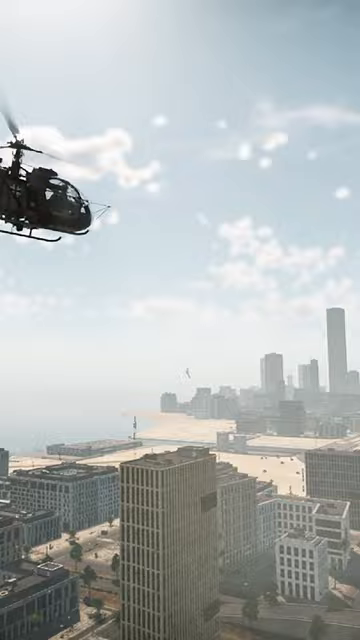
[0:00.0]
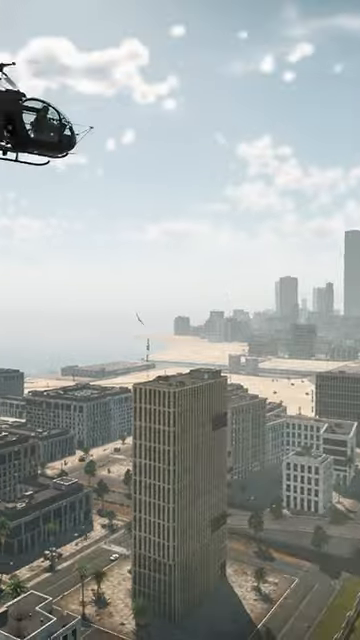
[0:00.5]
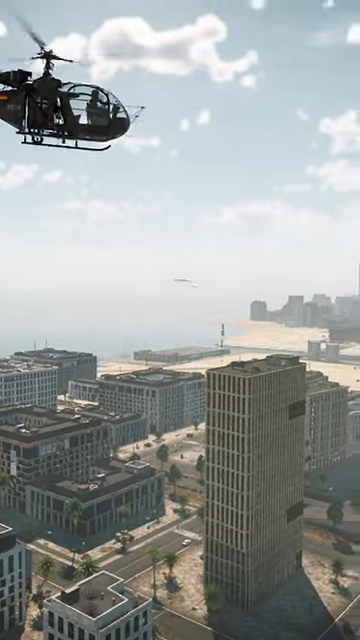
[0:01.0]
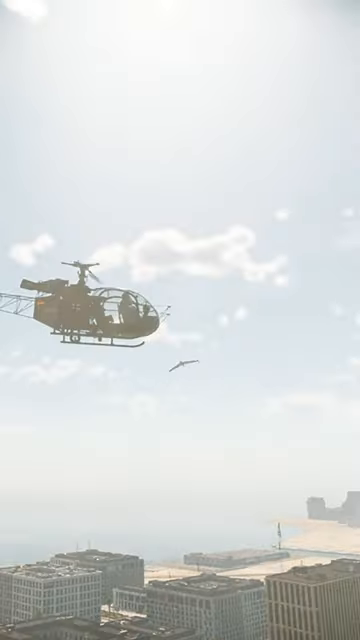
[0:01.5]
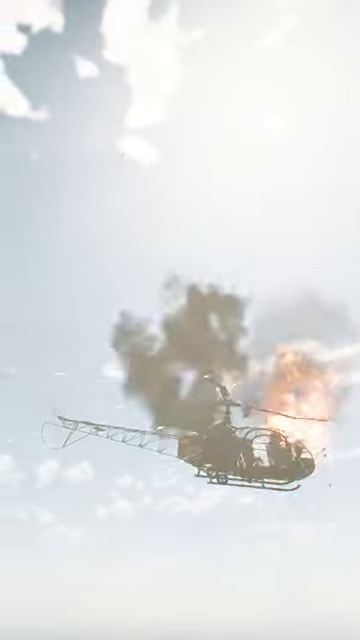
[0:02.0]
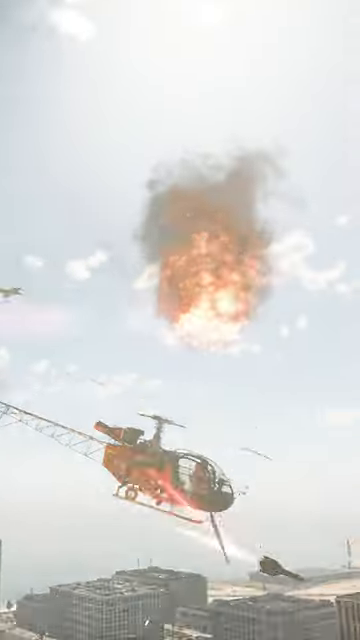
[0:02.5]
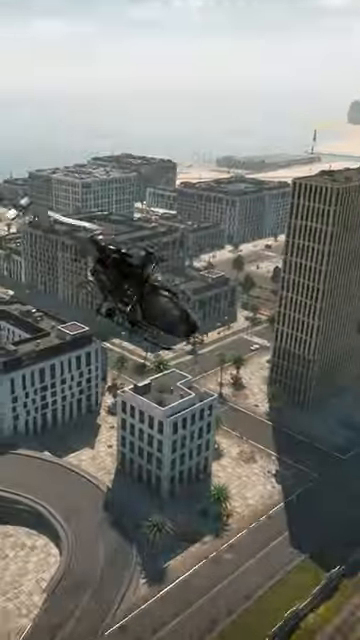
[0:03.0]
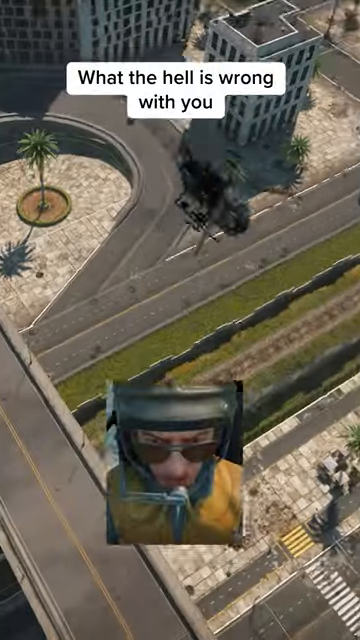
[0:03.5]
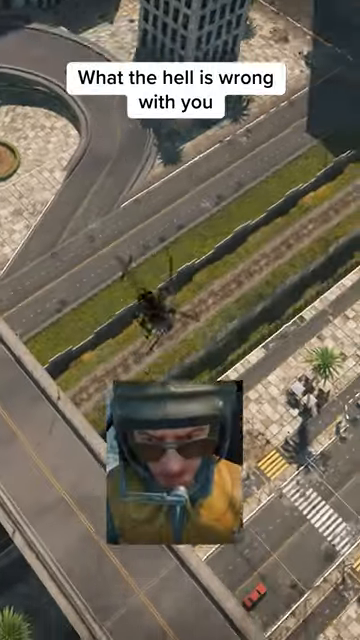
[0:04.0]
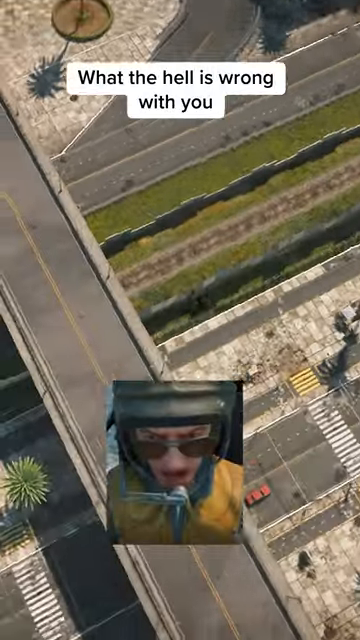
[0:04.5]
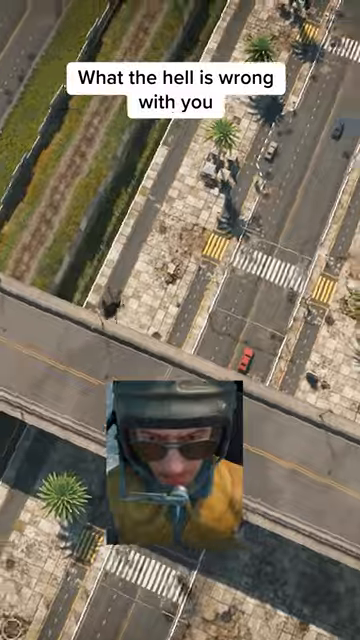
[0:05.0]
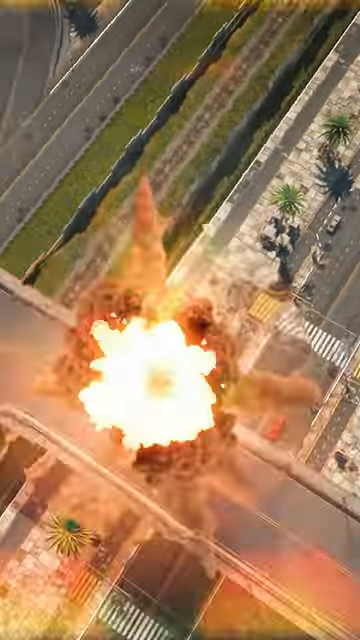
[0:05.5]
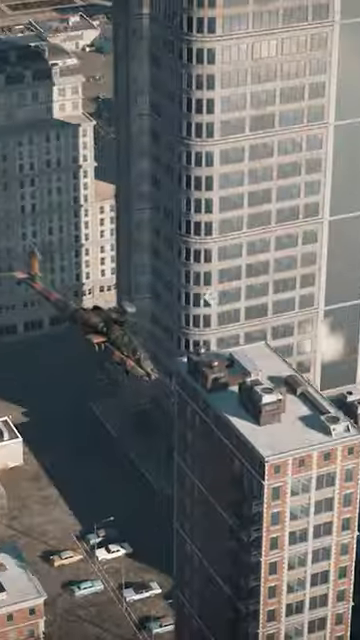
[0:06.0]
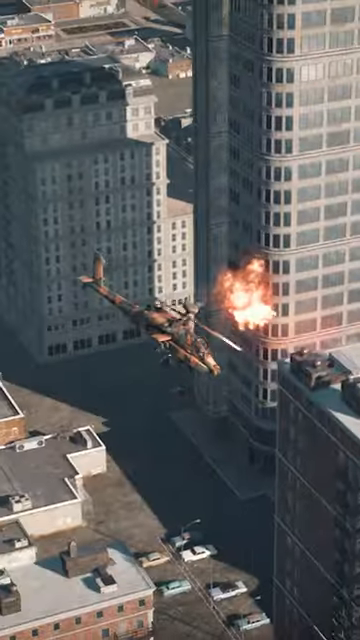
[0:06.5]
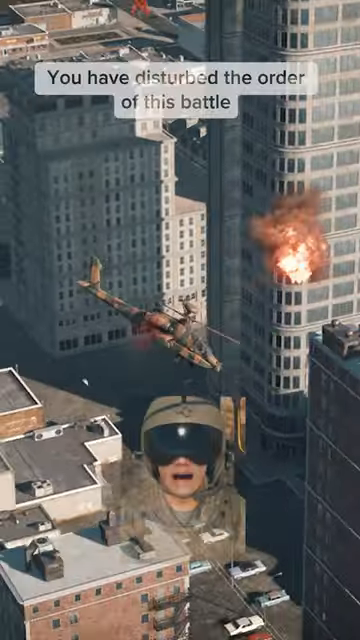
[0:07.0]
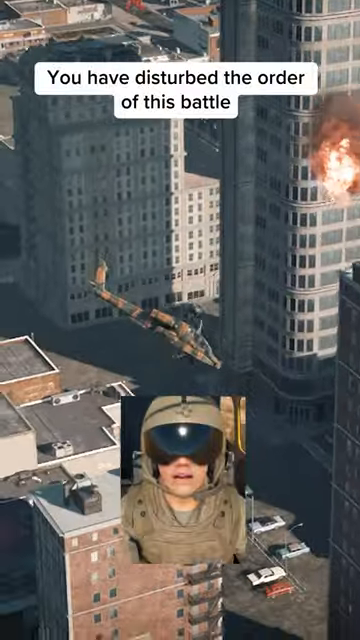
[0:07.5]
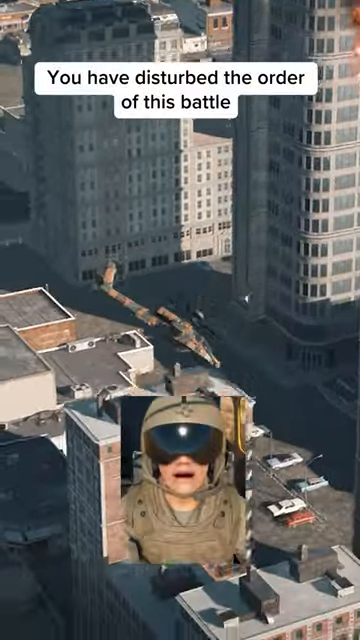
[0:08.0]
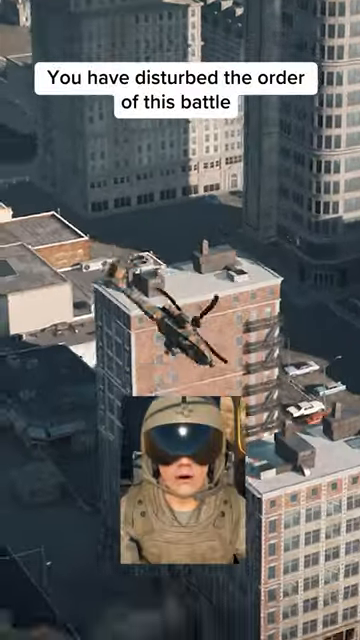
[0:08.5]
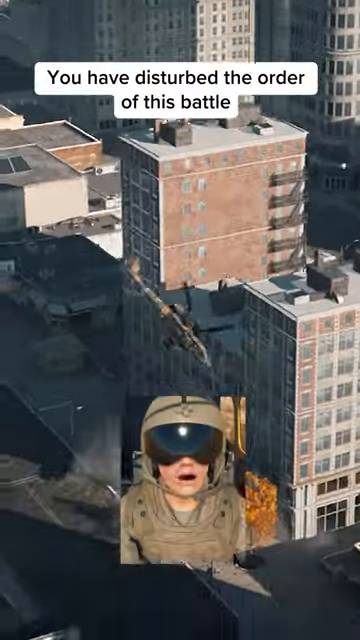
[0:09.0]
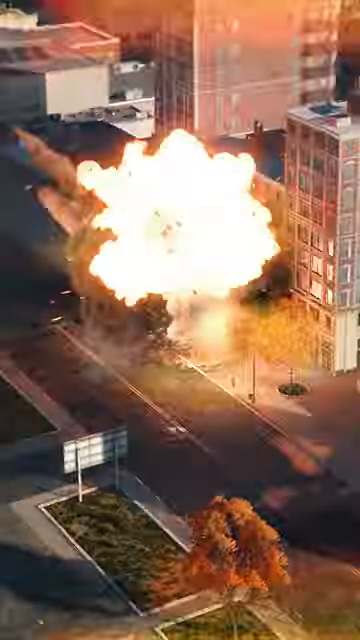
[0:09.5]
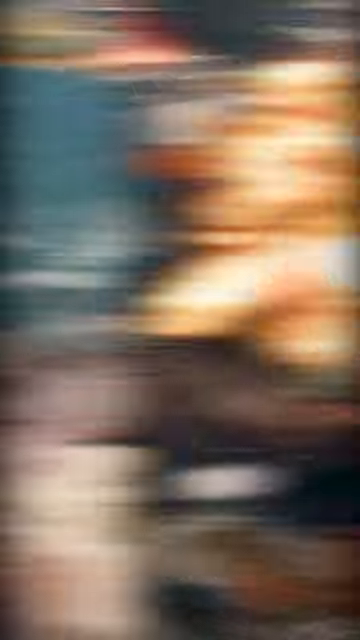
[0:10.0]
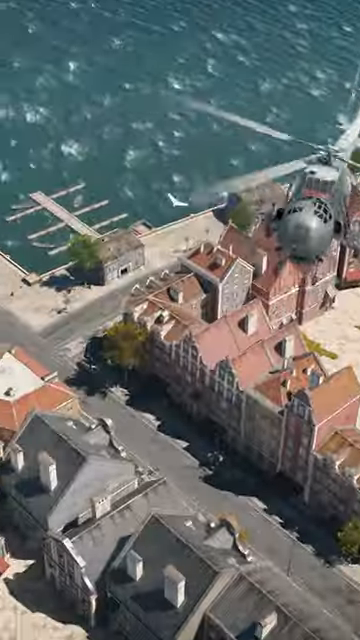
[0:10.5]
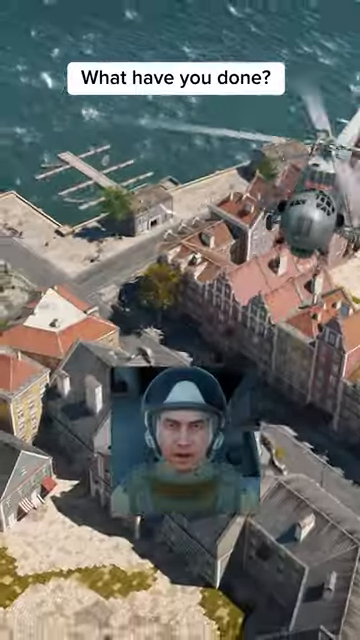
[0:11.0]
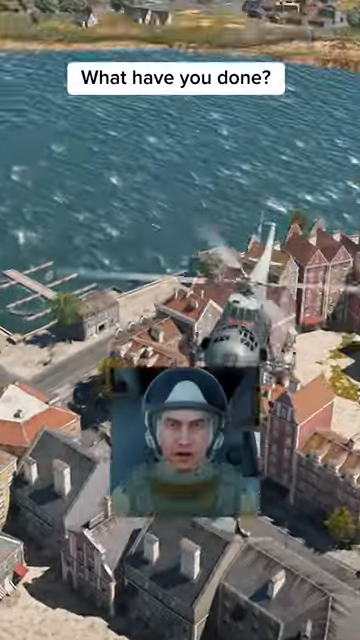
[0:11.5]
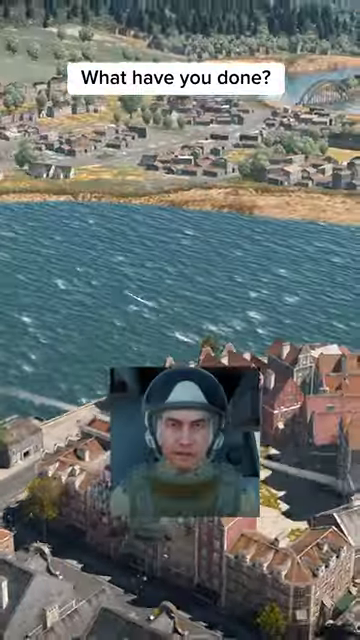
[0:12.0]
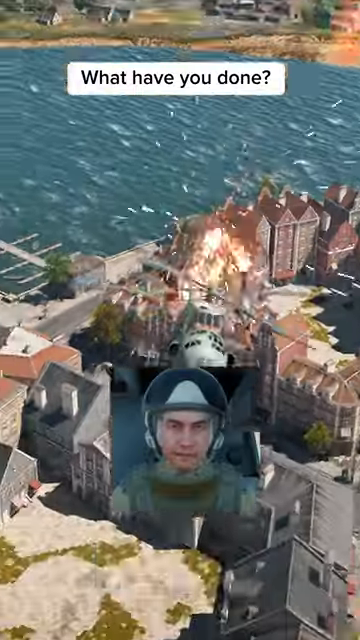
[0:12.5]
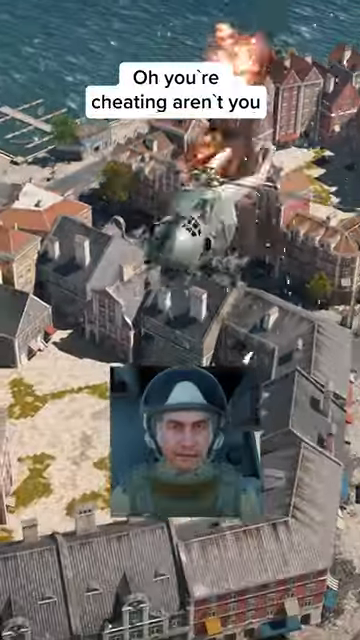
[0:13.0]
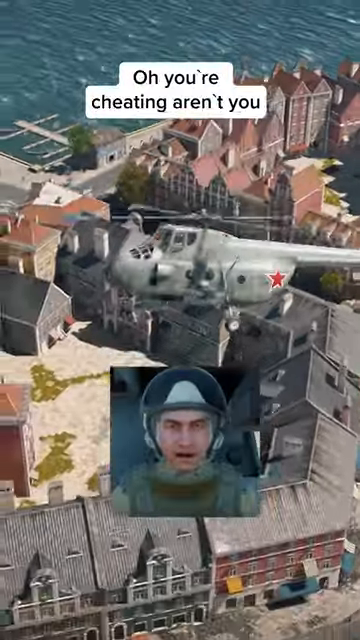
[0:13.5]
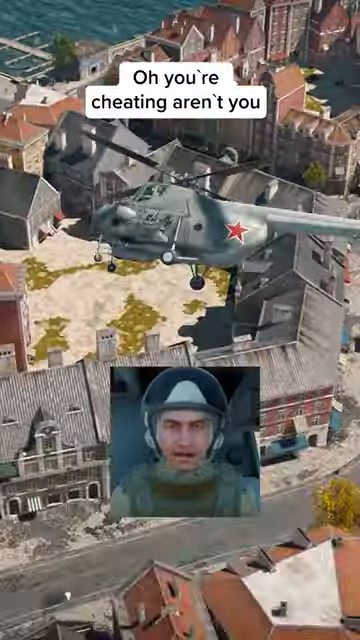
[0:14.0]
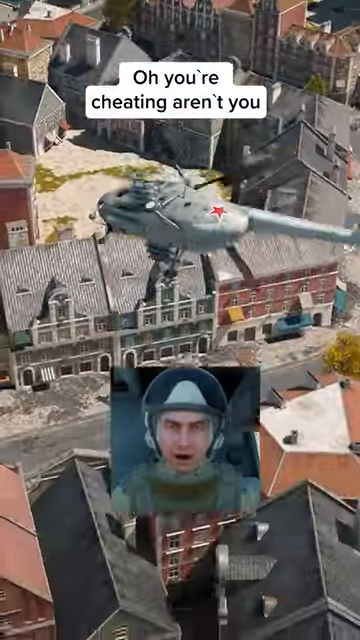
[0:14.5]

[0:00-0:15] The video opens on the sky, where a black helicopter is seen. A somewhat shaky camera moves around to show the helicopter exploding and falling toward the ground. The helicopter hits a road and fire and flames go everywhere. The scene transitions to what looks like skyscrapers and other buildings, with a helicopter flying around. Black text appears on the screen reading "you have disturbed the order of this battle." The helicopter falls downward, and an animated character appears wearing a helmet that somewhat shields his face, along with military tactical gear. The helicopter falls all the way down to the road, producing a huge combustion of flames and smoke. The scene then transitions to a neighborhood of sorts with some water in the background, where a helicopter's blades are going around. Text at the top of the screen reads "what have you done." An animated character, apparently wearing a pair of headphones, is talking and moving slightly. More explosions happen, with black text at the top reading "oh you're cheating aren't you." A helicopter spins around somewhat and then falls.